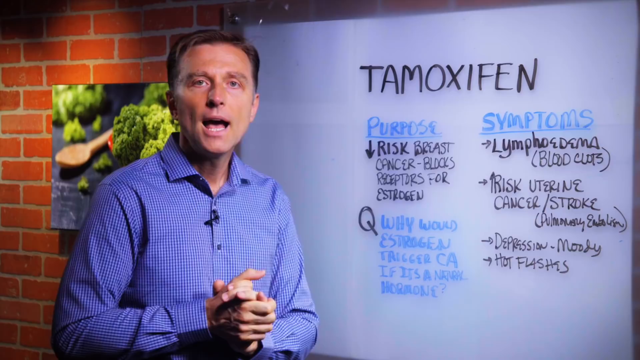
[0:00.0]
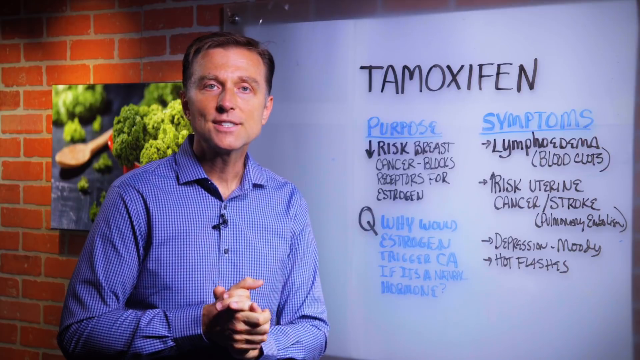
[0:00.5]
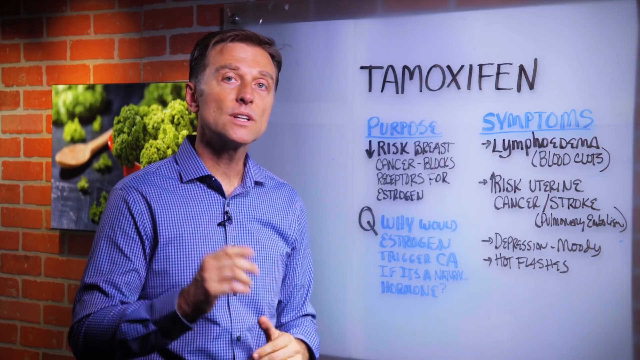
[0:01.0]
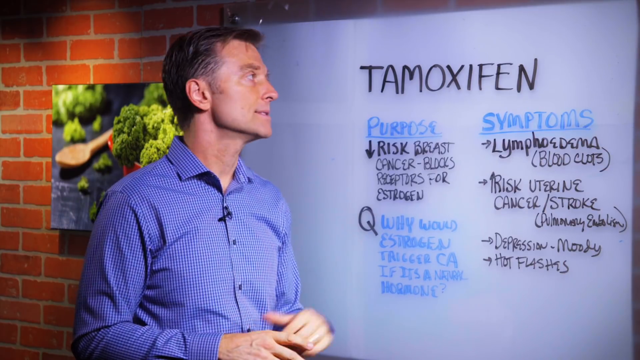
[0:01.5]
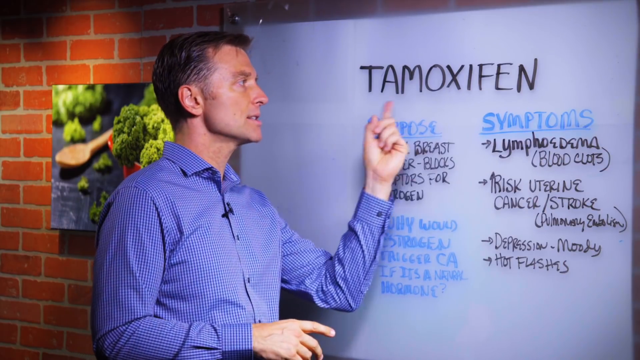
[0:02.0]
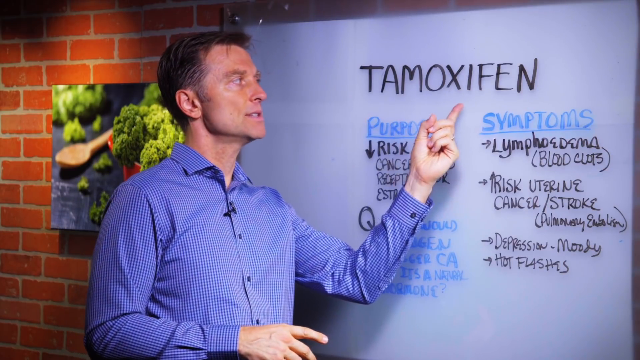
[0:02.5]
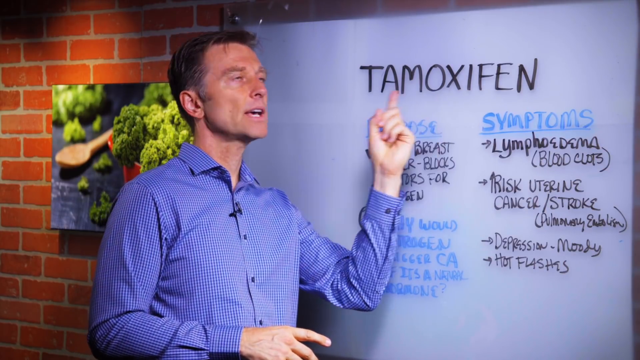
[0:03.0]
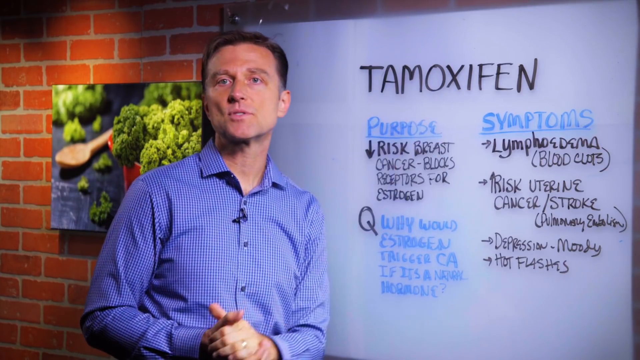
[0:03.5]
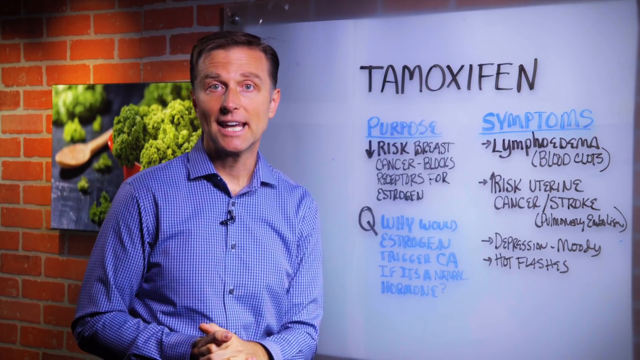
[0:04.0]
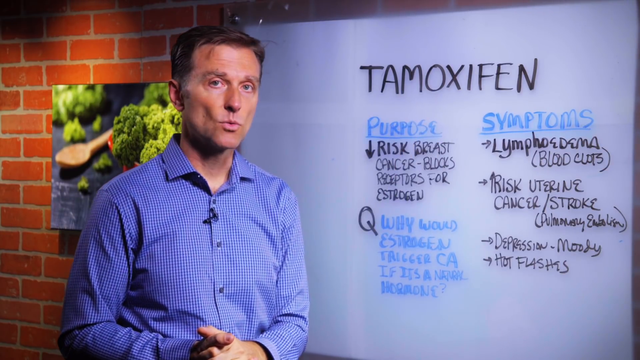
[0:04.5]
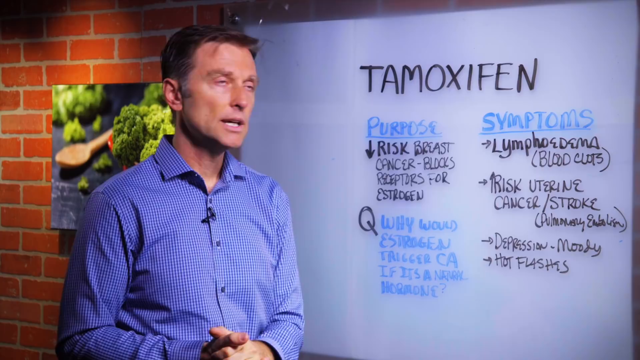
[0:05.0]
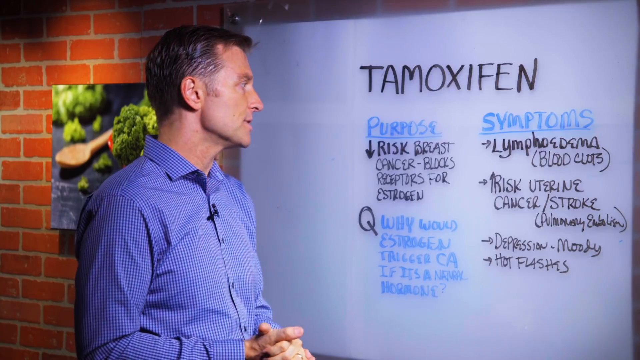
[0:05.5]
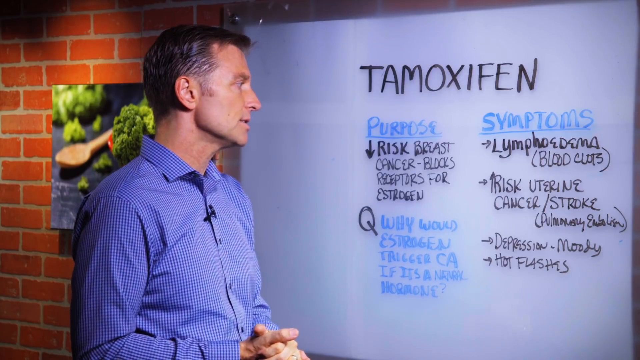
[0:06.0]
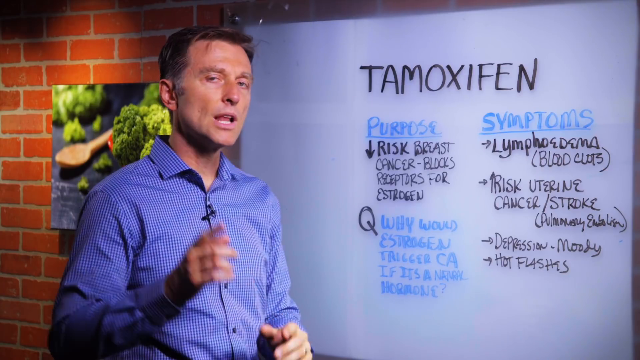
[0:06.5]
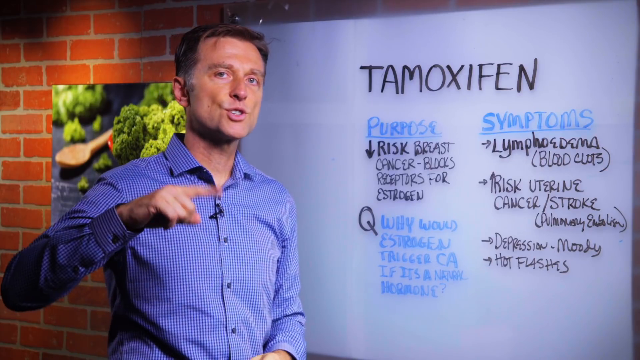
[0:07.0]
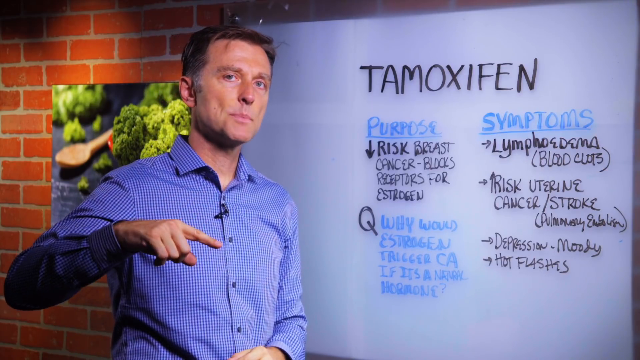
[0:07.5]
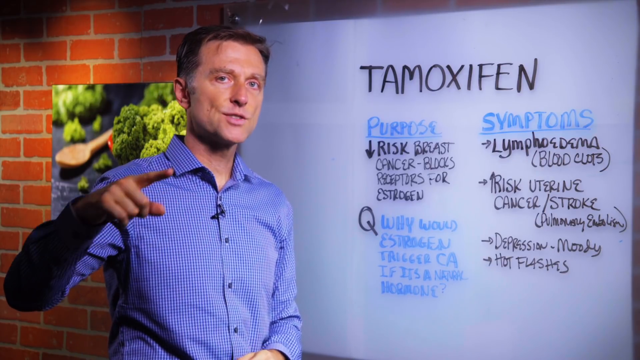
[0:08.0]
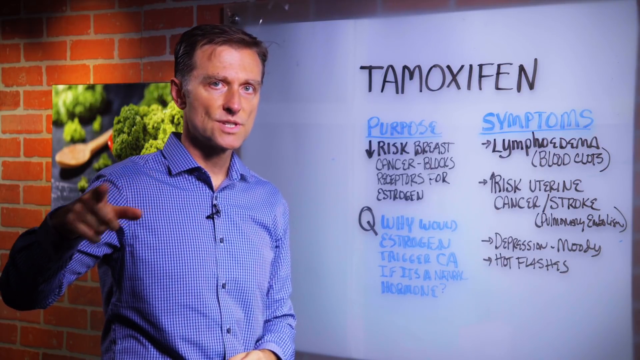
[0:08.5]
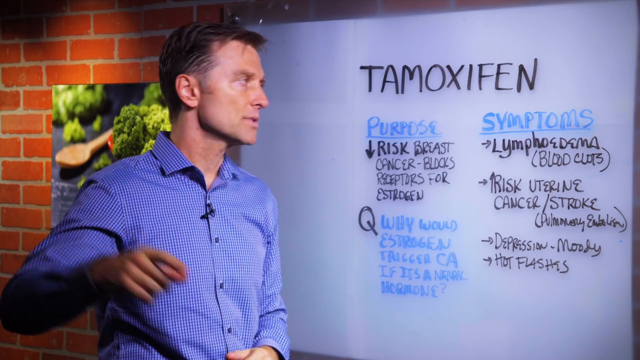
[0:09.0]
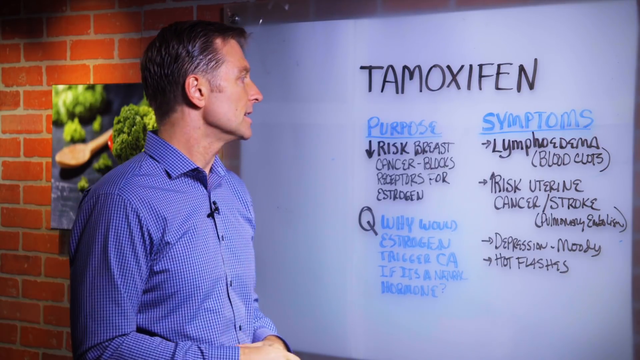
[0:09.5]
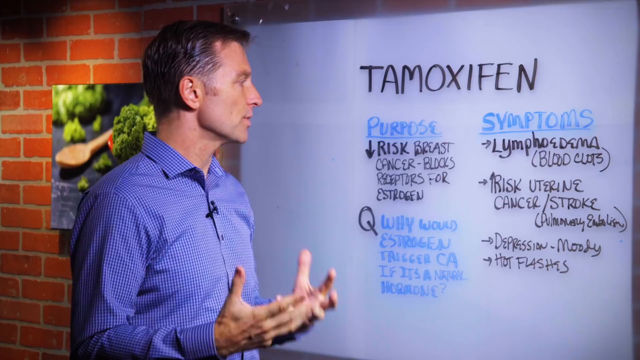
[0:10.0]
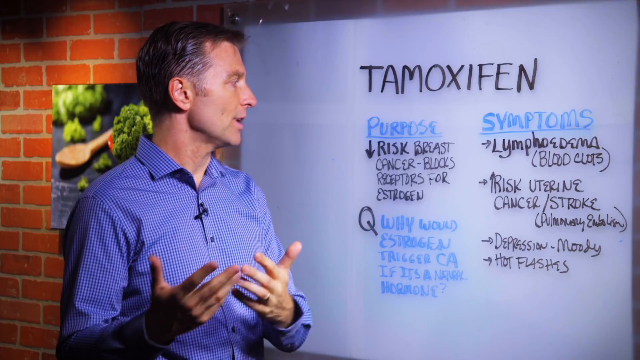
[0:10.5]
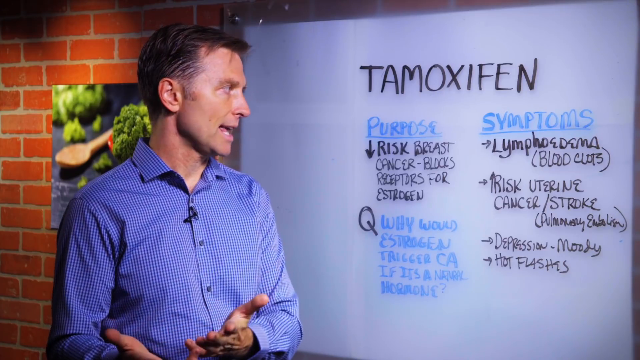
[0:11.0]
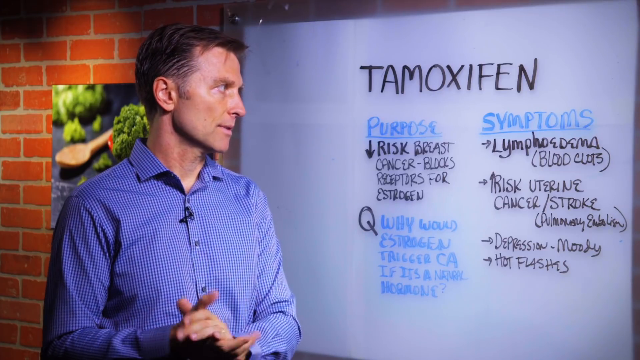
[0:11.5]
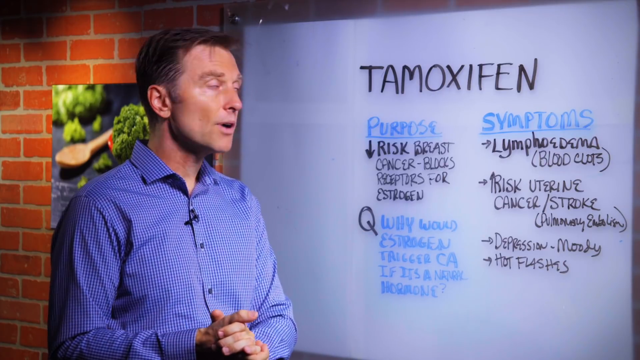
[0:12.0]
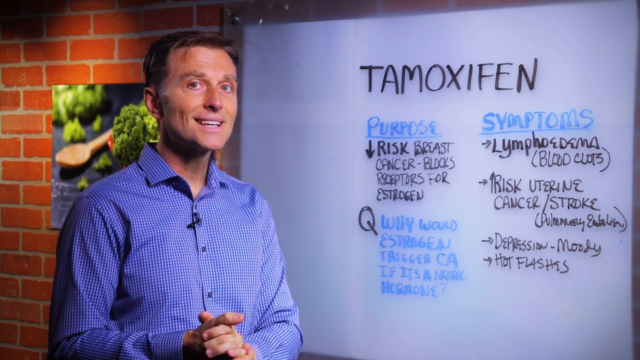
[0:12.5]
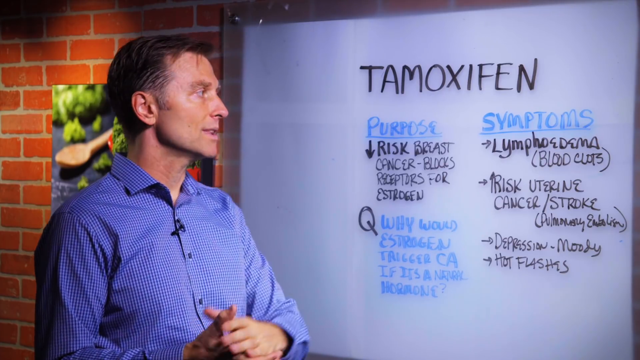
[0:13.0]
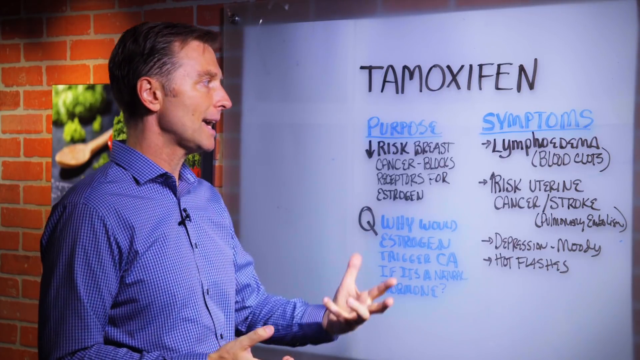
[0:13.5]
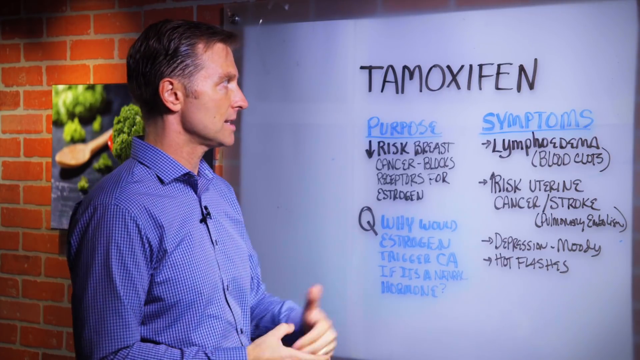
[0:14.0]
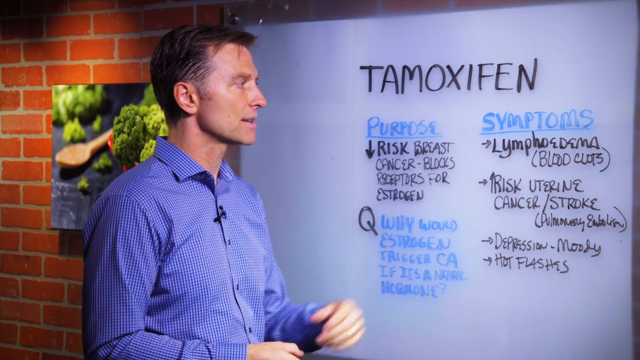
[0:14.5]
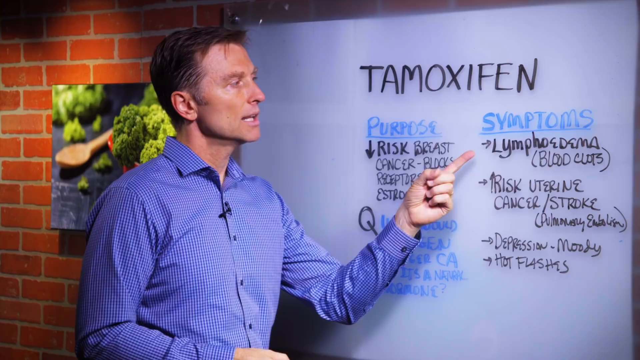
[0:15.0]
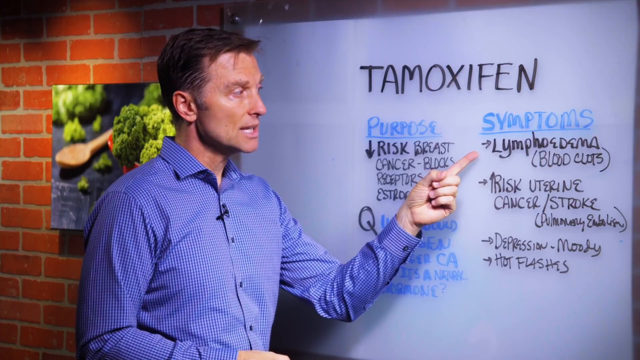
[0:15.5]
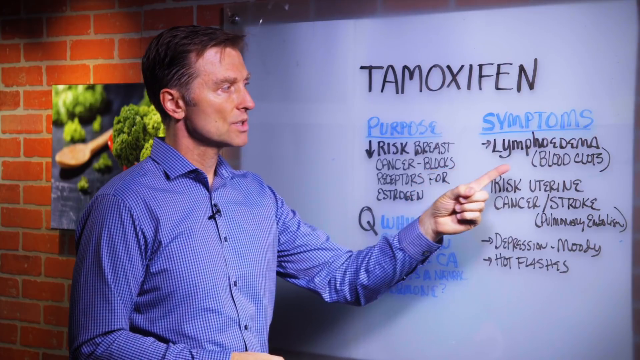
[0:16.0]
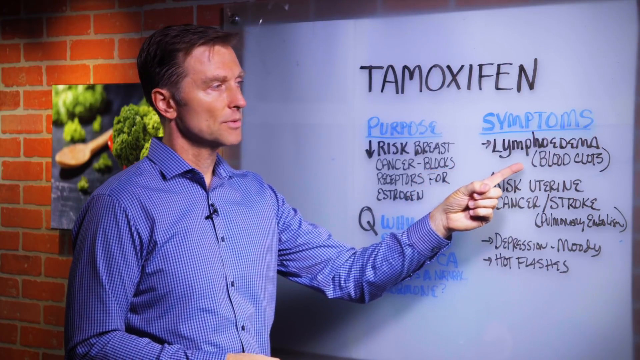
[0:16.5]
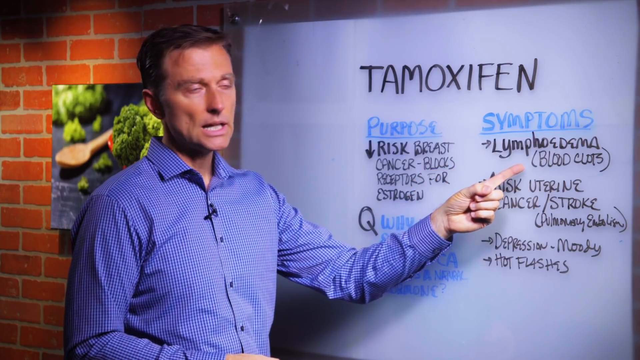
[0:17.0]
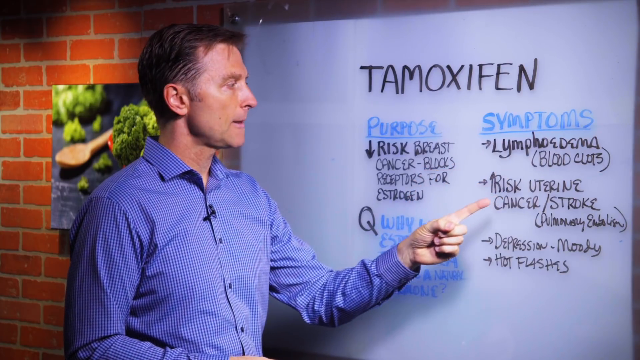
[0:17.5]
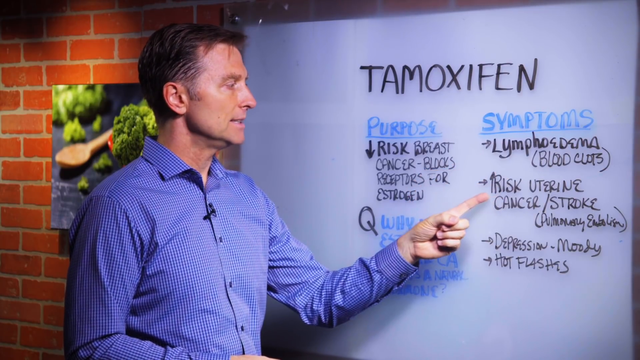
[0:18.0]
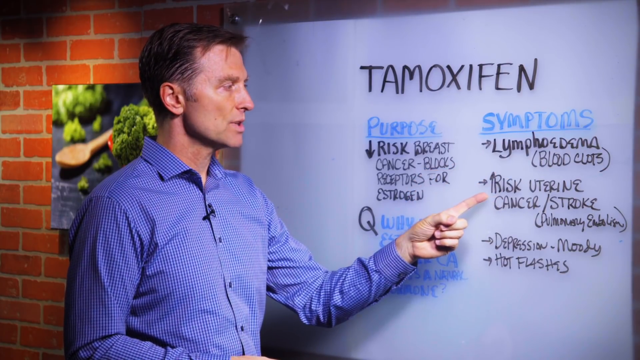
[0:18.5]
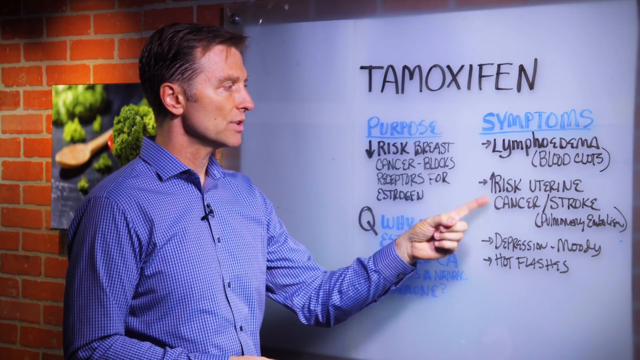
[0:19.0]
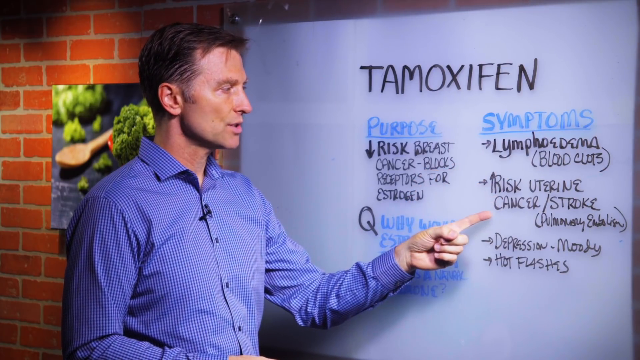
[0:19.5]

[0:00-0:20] A white man stands with his hands clasped in front of a whiteboard with the word "tamoxifen" on it. He wears a button-down shirt with a very small checkered pattern in blue and gray or white. Below "tamoxifen" there is more writing: in blue, "purpose", then in black a down arrow and "reduce risk, breast cancer, blocks receptors for estrogen". Next comes "question" with a black Q, and in blue writing, "why would estrogen trigger CA if it's a normal hormone". To the right is the word "symptoms" in blue, followed in black by "lymphedema, blood clots, increased risk, uterine cancer / stroke, pulmonary embolism, depression, moody, hot flashes". The man points to these items as he talks.